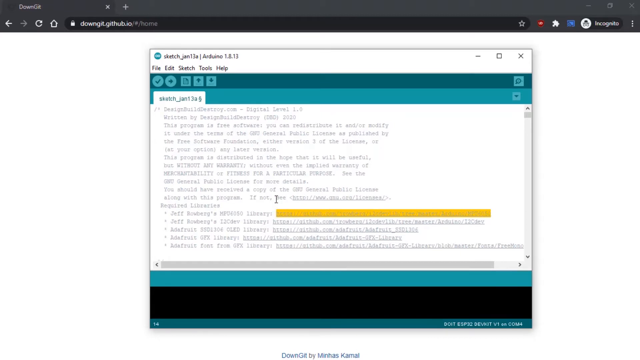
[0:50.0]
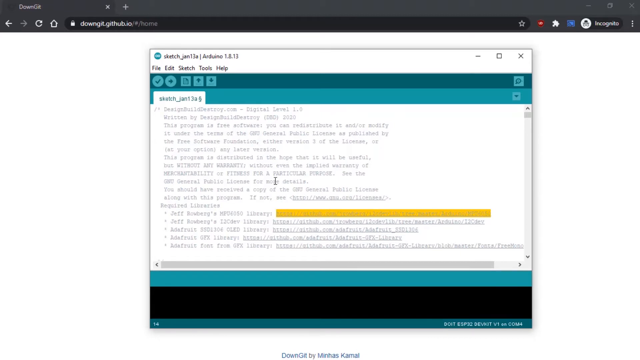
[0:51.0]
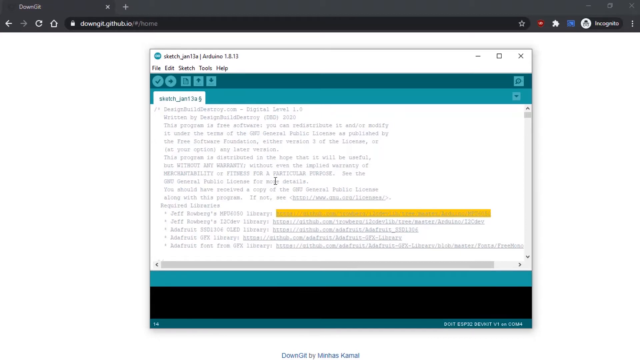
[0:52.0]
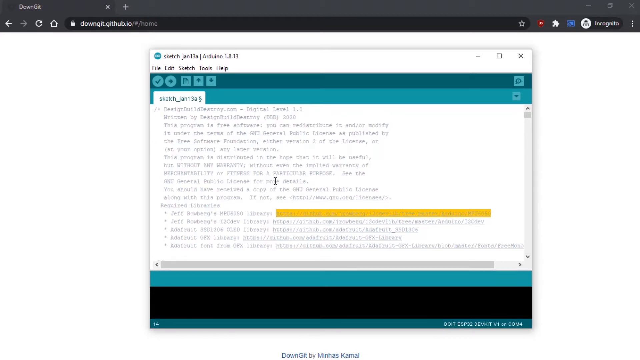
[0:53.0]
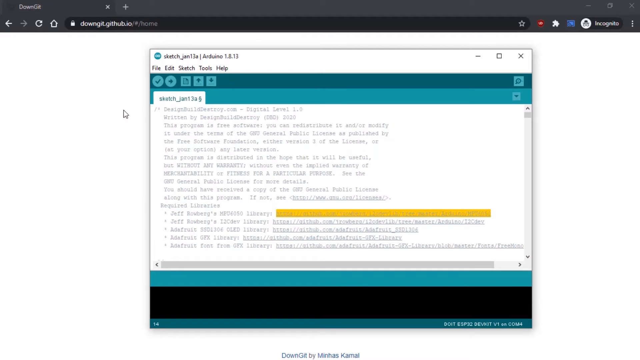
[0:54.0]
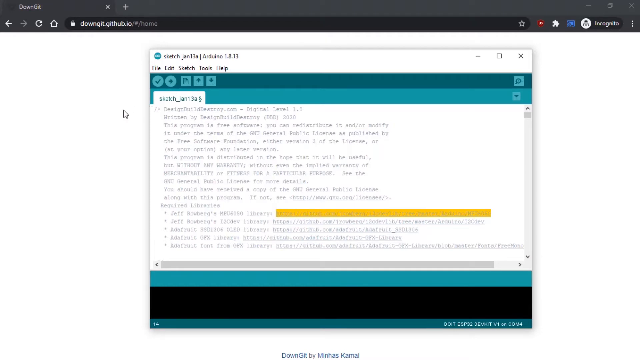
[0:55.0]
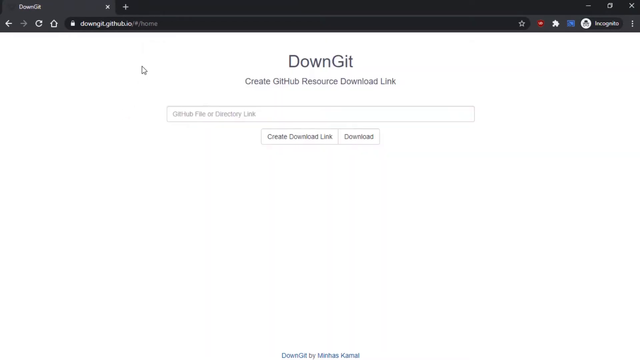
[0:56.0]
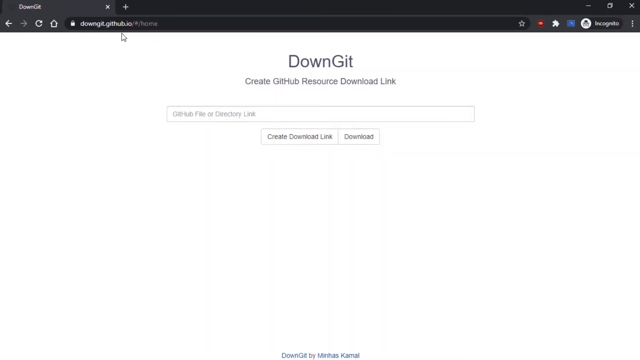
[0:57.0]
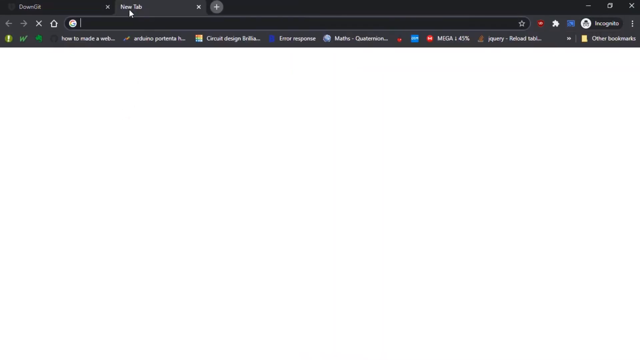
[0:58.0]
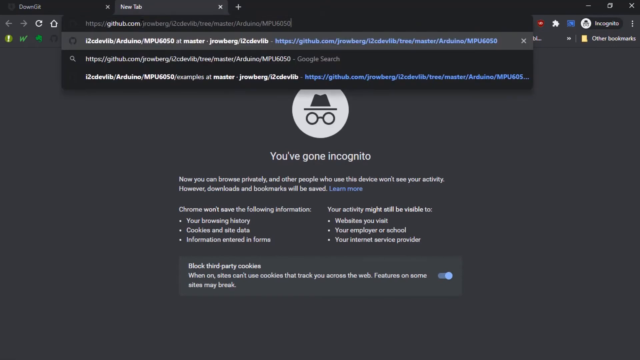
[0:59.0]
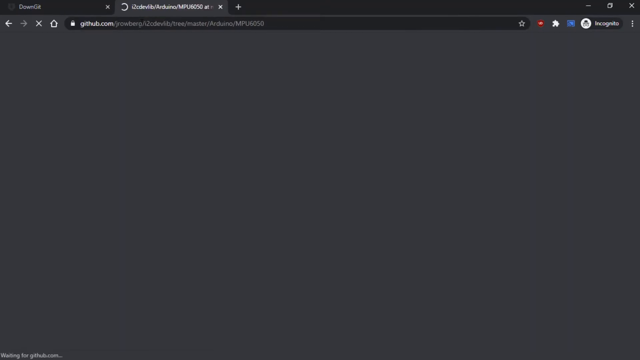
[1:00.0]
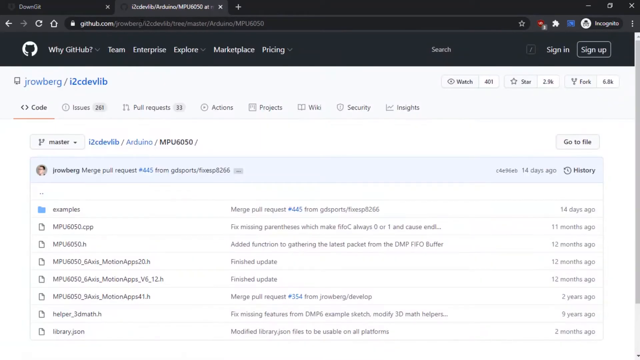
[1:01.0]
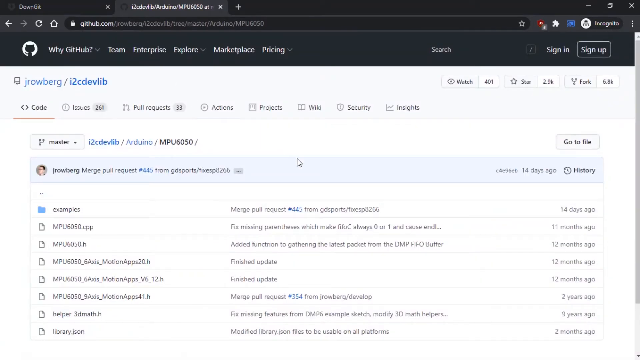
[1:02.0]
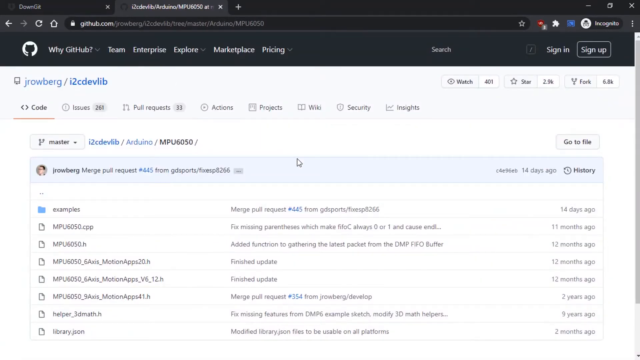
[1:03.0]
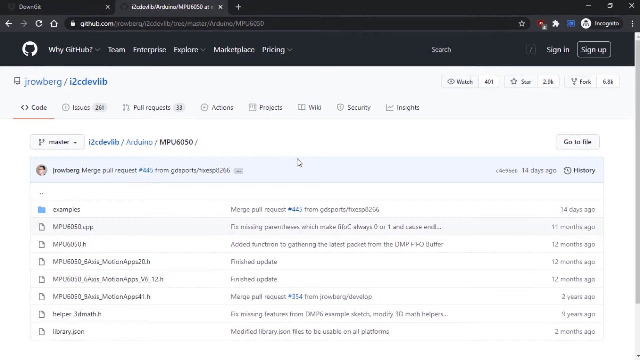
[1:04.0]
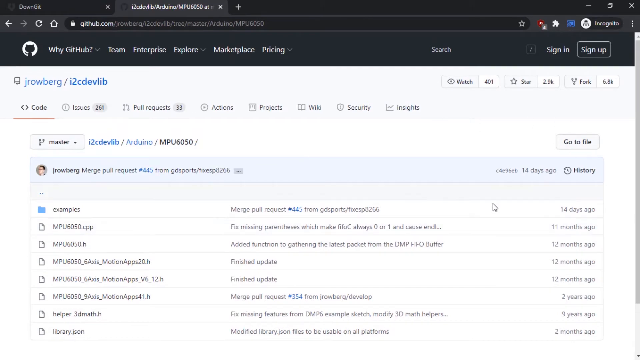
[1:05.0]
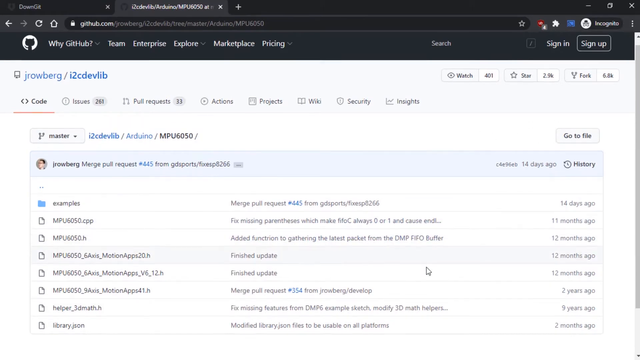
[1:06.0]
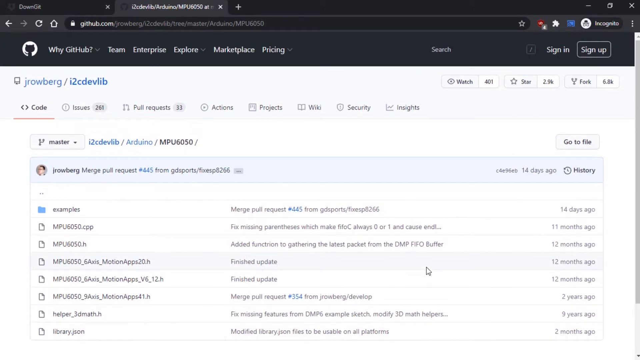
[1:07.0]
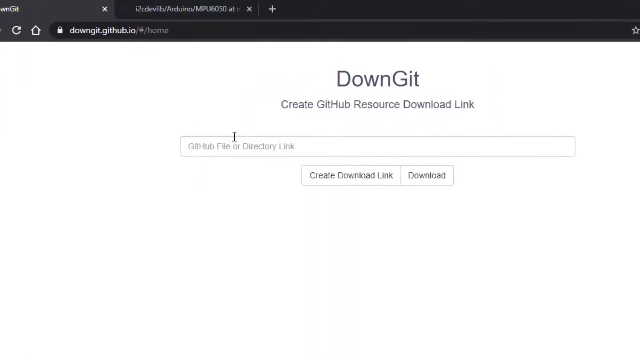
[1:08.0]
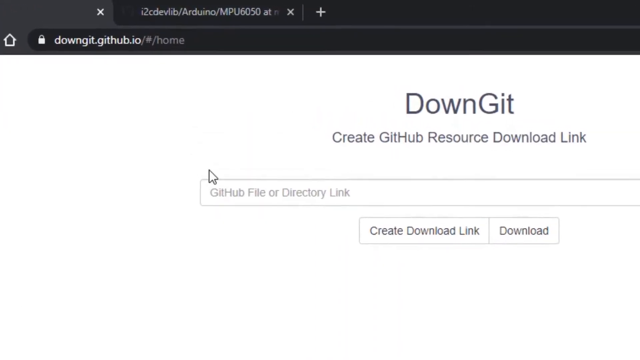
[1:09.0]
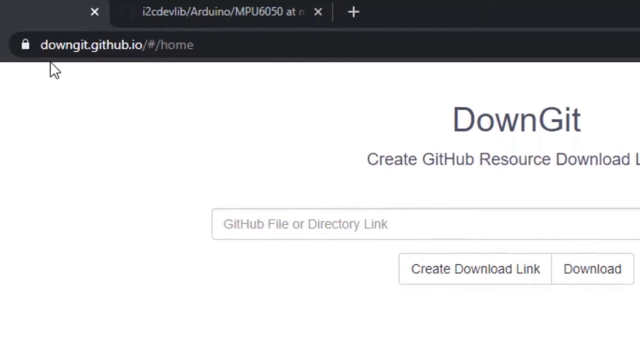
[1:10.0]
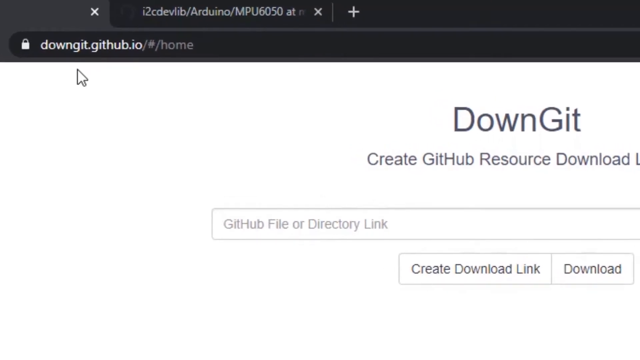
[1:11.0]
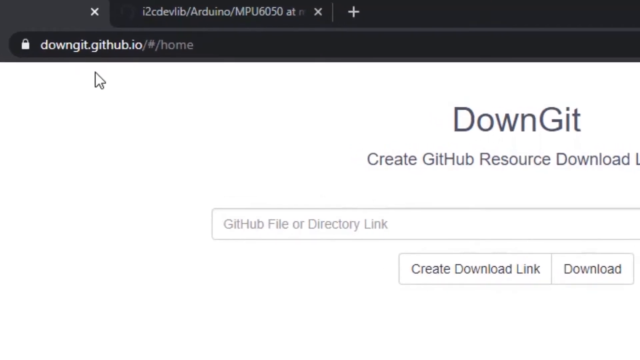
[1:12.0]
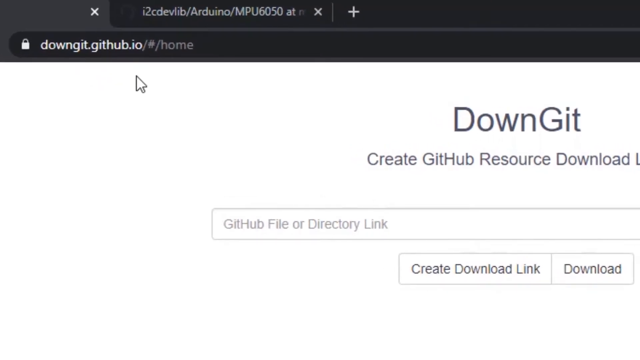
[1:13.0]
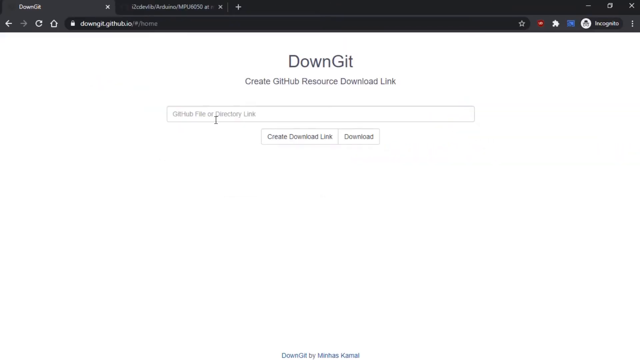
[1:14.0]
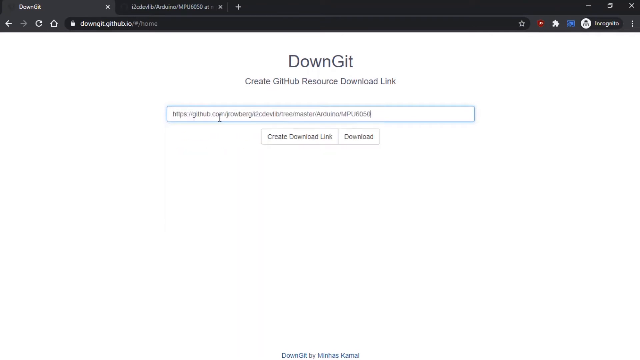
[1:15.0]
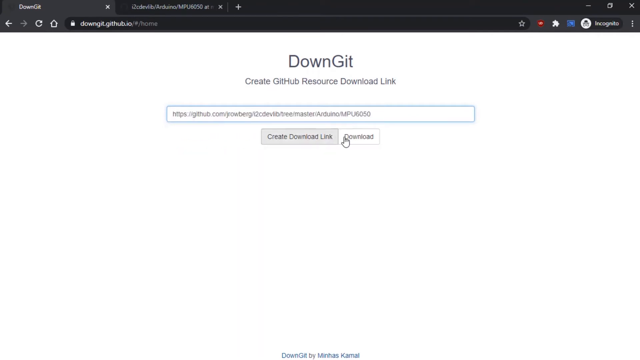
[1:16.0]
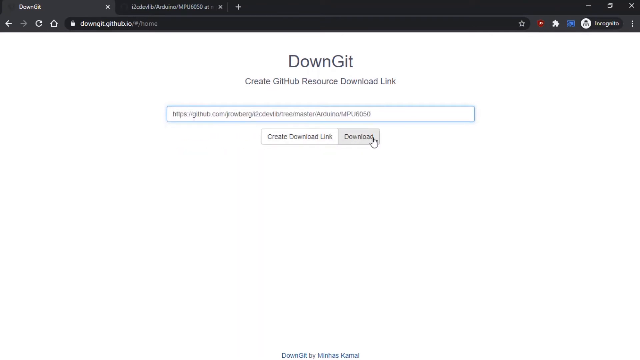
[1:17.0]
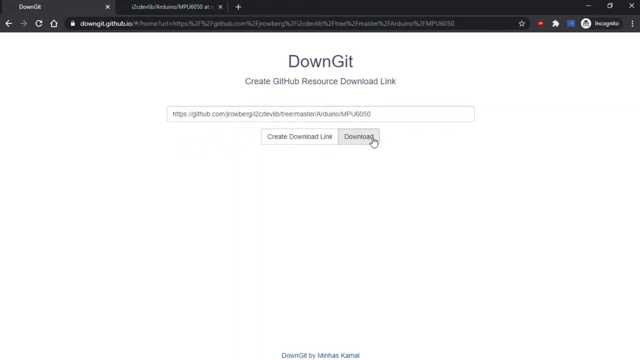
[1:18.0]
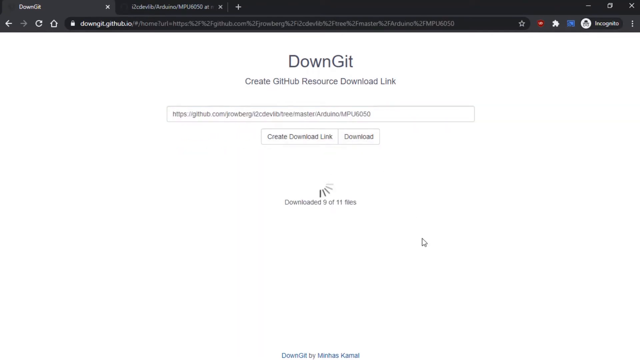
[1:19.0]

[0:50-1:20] A recording of a computer screen shows an internet browser window overlaid by a smaller Arduino application window with a sketch file open. The user has highlighted a web link under the required libraries section, the link for the first library in the list. They navigate back to the internet browser window behind the Arduino window, and the Arduino window disappears from view. They open a new tab in the browser, which looks like an incognito tab, and paste in the web address copied from the sketch file, opening a GitHub page. They scroll down the page and look up at it, then switch to the first tab in the browser, and the camera pans into the URL bar, which reads "downgit.github.io". The user slowly moves the cursor underneath the text, maybe highlighting it for the viewer. The camera pans outwards to show the full browser view, and the user clicks in the input on the downgit website, pastes in a web link, and selects the download button below the input.